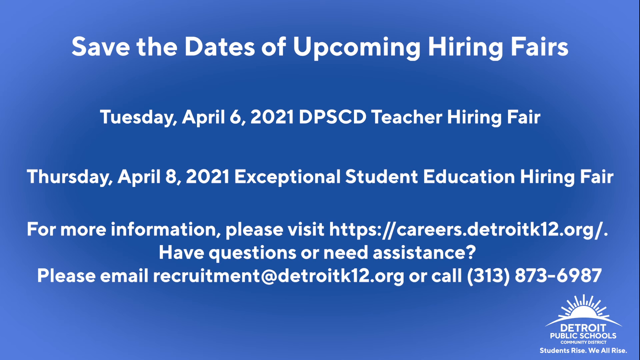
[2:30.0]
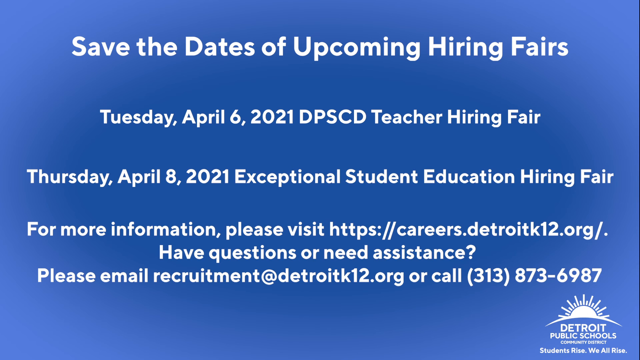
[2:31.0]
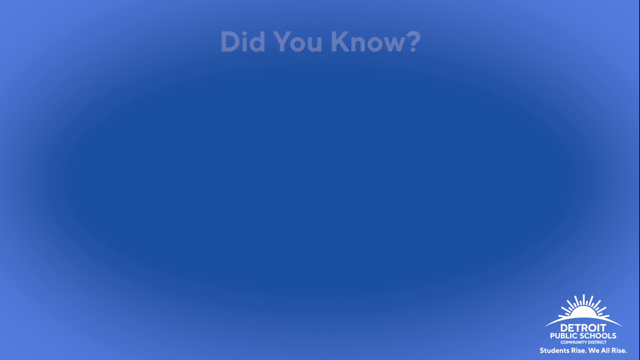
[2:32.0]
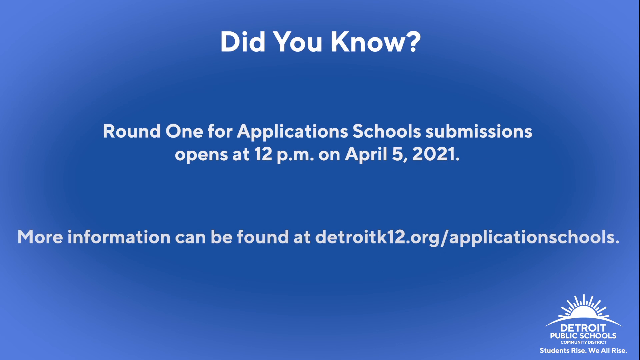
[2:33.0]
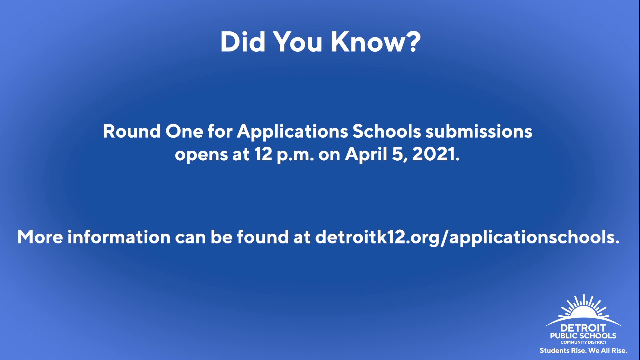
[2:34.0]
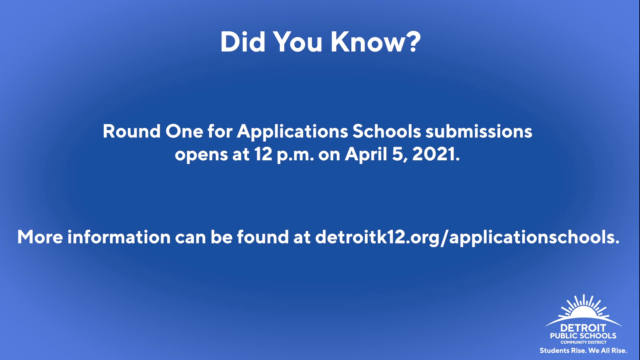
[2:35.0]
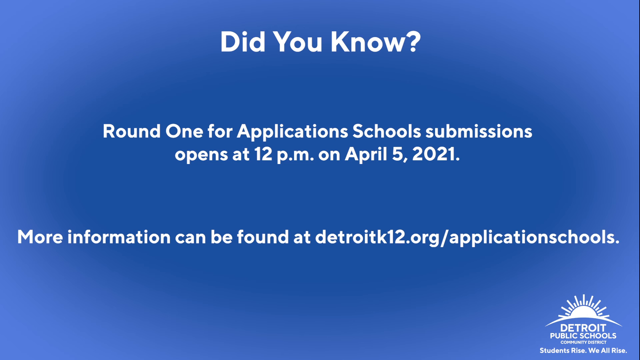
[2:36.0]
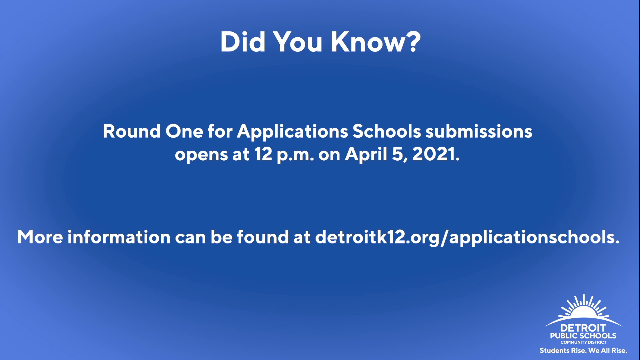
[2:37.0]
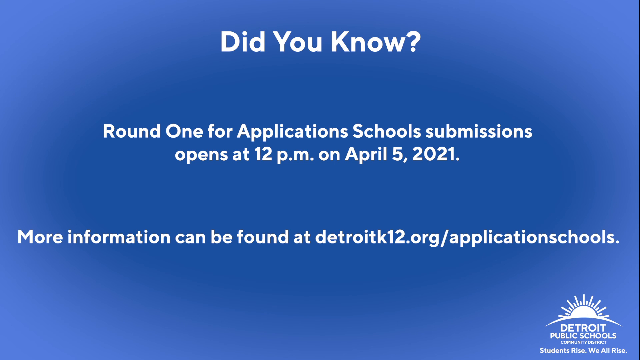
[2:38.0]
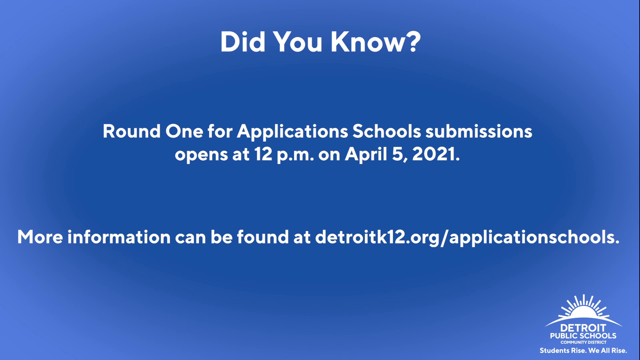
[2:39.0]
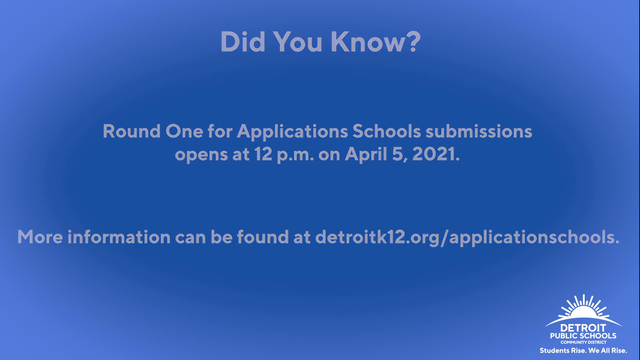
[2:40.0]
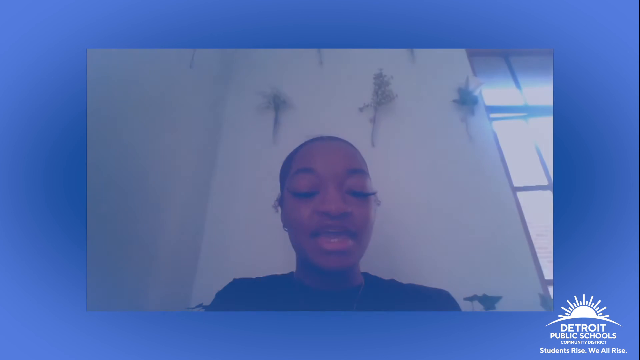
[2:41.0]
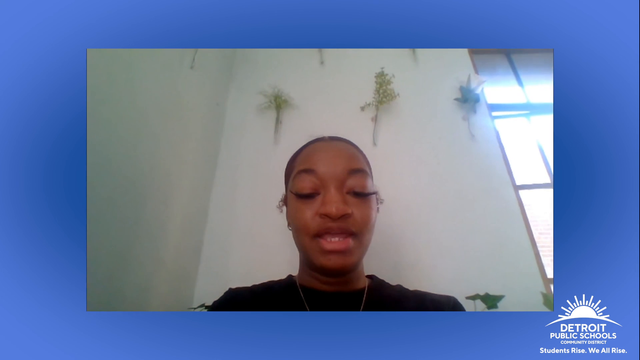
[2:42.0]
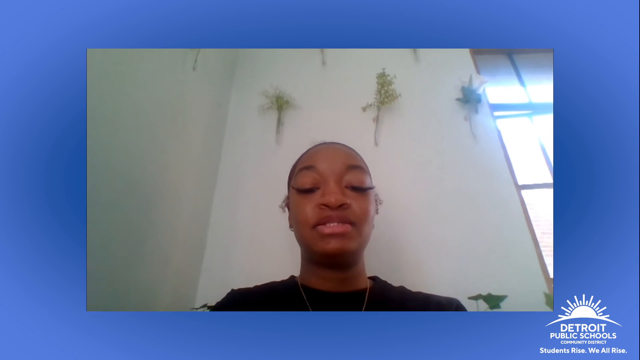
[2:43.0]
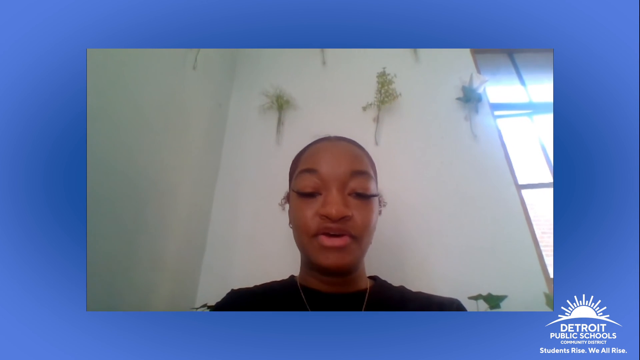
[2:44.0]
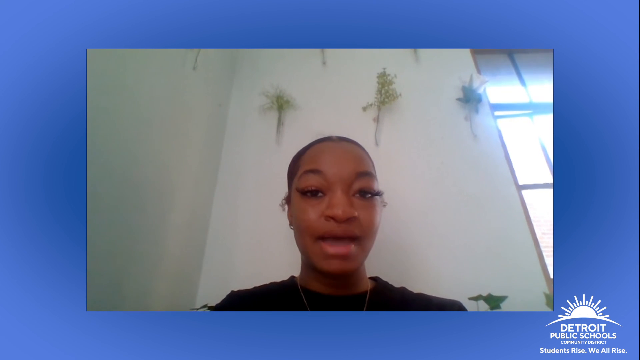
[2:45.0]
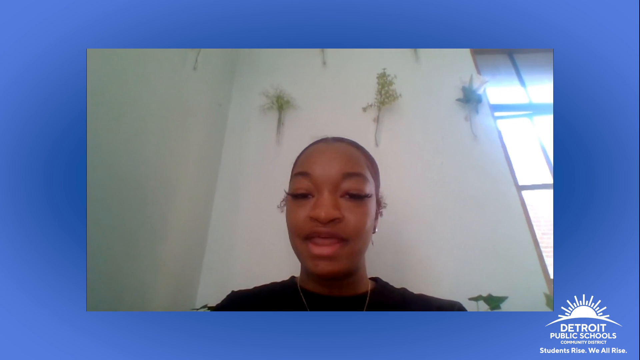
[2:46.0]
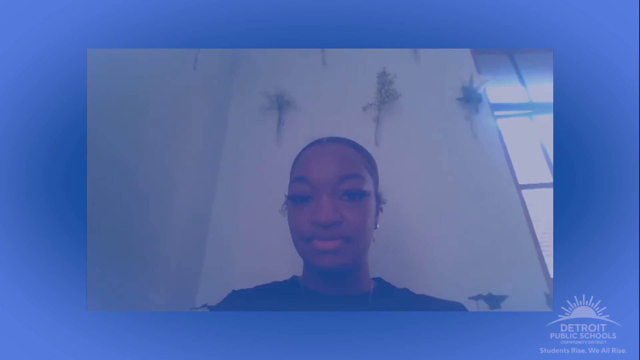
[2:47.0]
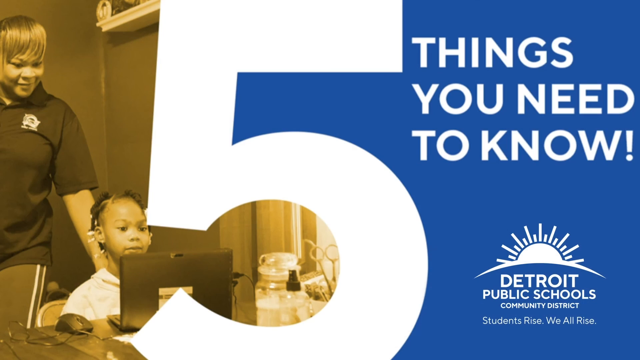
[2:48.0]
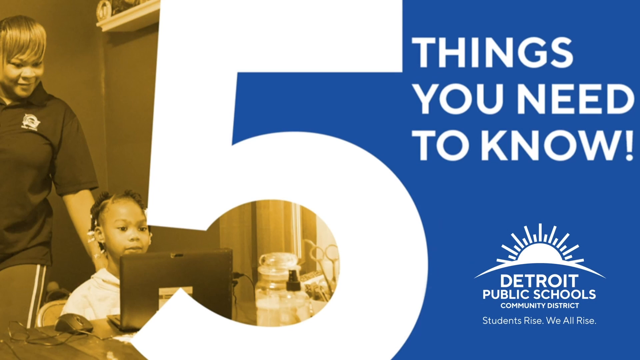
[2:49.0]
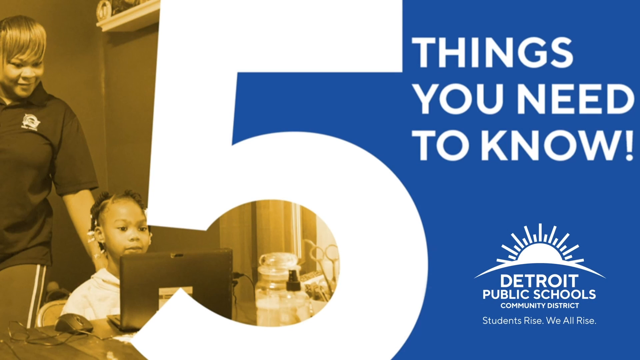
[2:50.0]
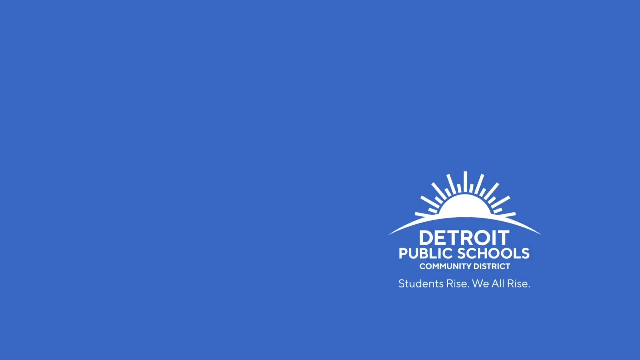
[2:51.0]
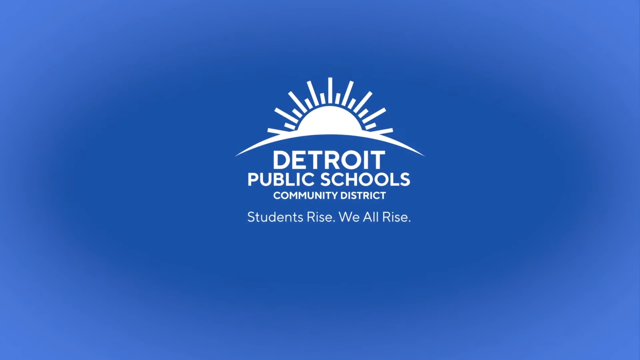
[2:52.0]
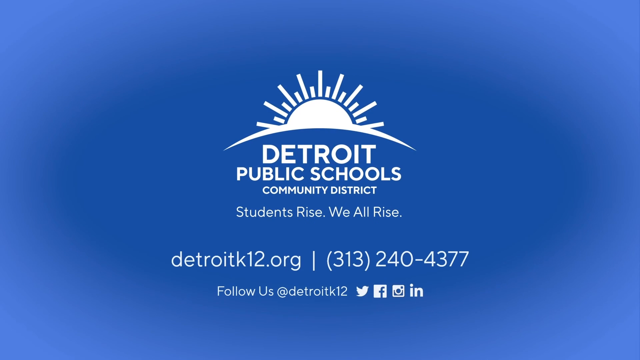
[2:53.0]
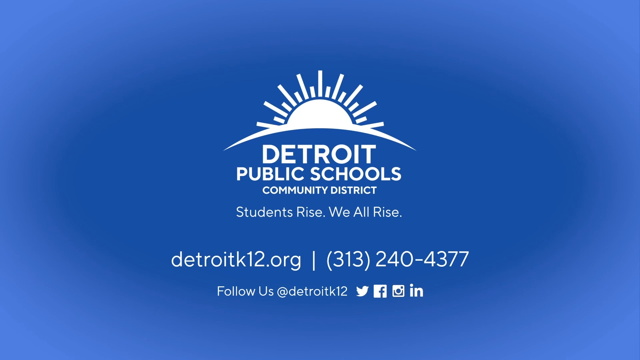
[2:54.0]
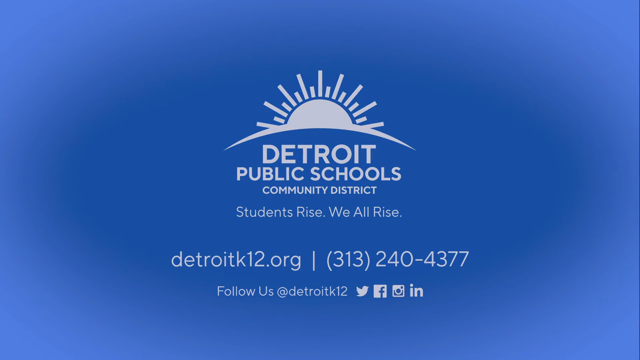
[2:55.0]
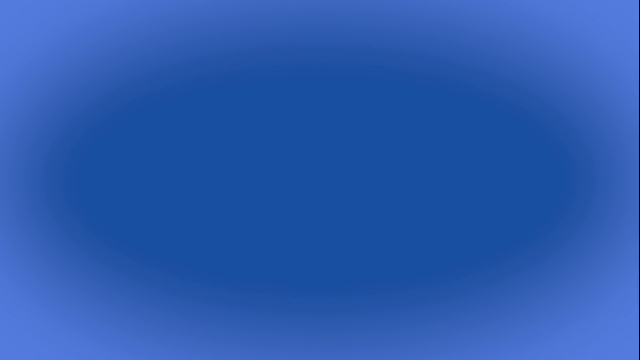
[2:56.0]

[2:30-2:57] The Save the Dates page is on screen before the video transitions to a "Did You Know" page. The "Did You Know" lettering at the top, with its question mark, is white. The background is blue, fading into a slightly lighter blue around the edges. A couple of spaces below, in the center, it reads "Round 1 for Applications School Submissions opens at 12 p.m. on April 5, 2021," all in white. A couple of spaces below that is "More information can be found at DetroitK12.org/application schools." The video then goes to a lady who looks like she is filming herself in her room; her walls are white, and she appears to be talking and looking at the camera. It then transitions to a big 5, with a woman and a young girl on the left and "Things you need to know" on the right, with the Detroit Public Schools logo at the bottom right. Finally, it transitions to a blue page with just the Detroit Public Schools Community District logo, with those words written below it, and it lists their email and phone number.